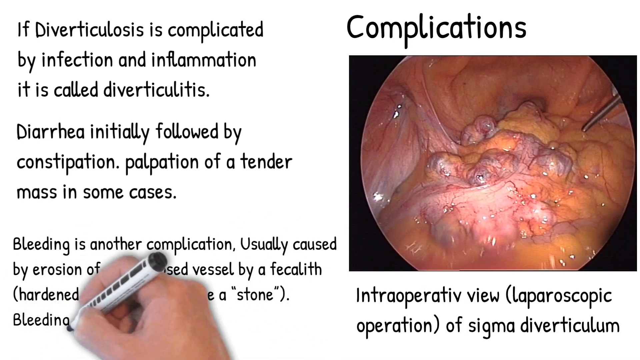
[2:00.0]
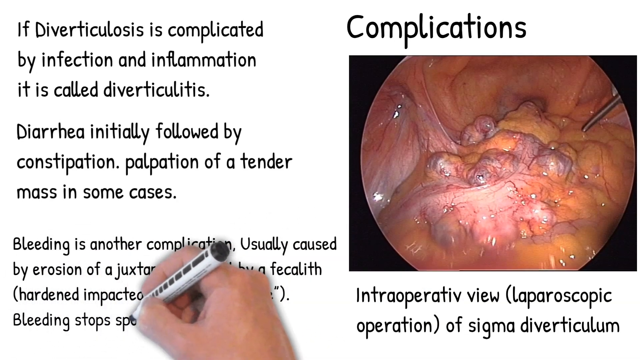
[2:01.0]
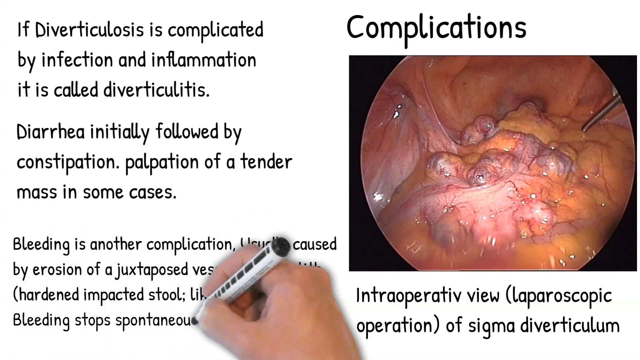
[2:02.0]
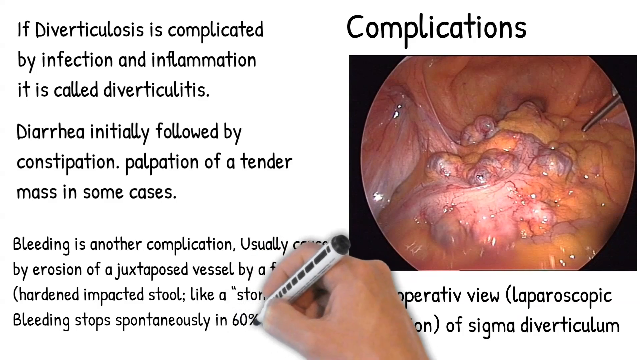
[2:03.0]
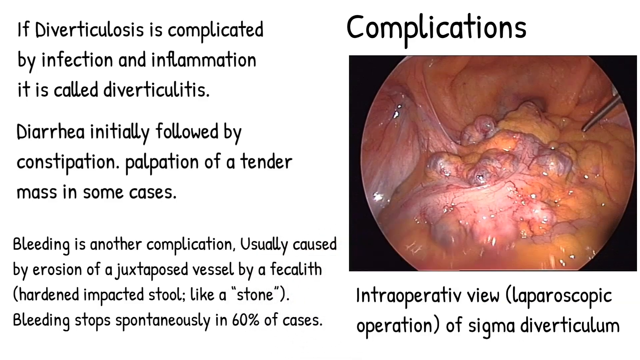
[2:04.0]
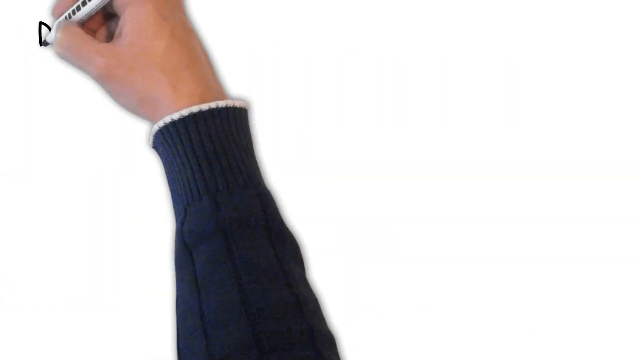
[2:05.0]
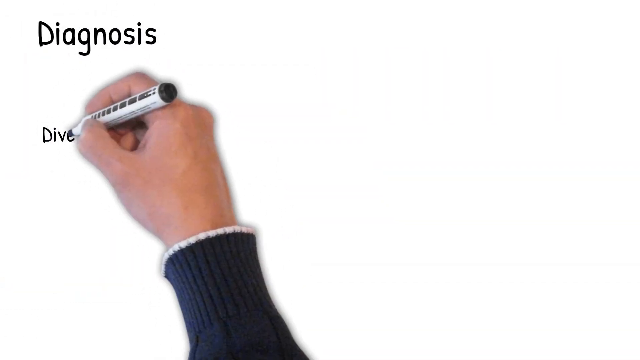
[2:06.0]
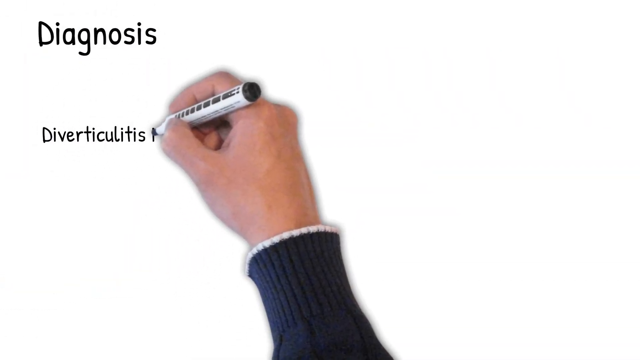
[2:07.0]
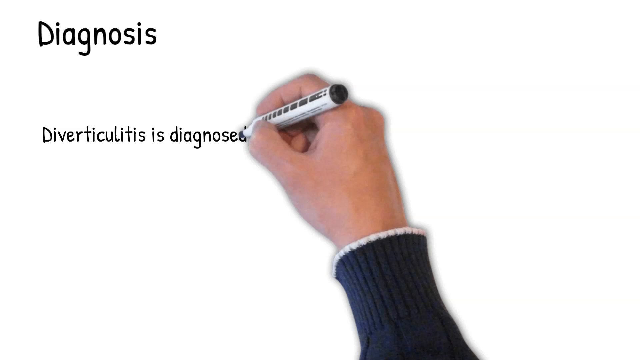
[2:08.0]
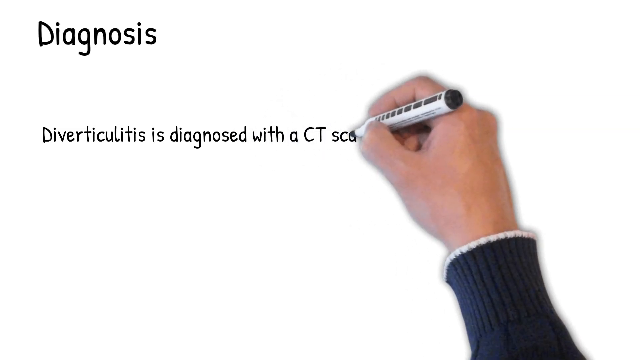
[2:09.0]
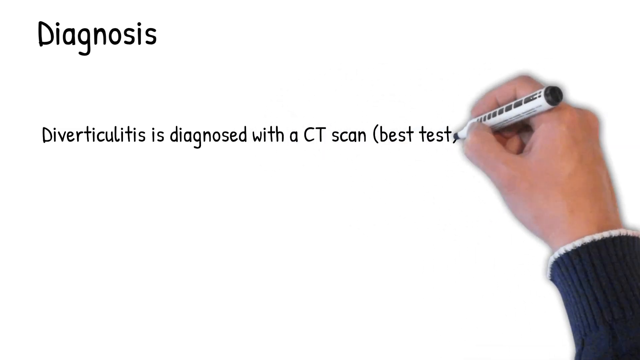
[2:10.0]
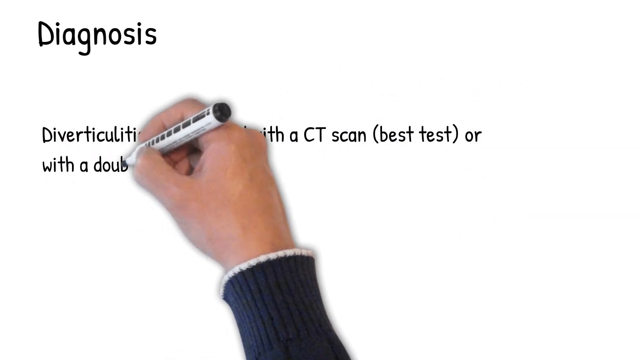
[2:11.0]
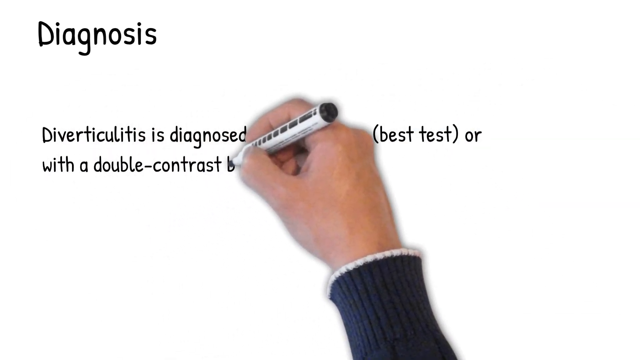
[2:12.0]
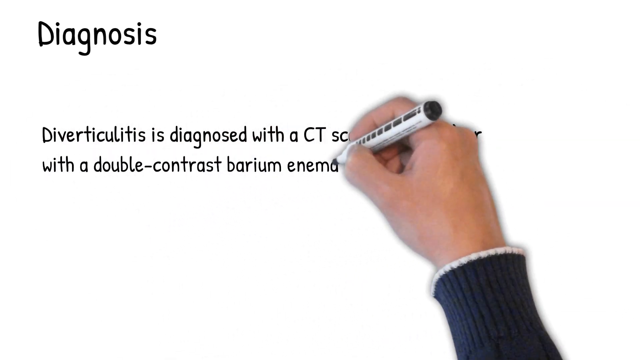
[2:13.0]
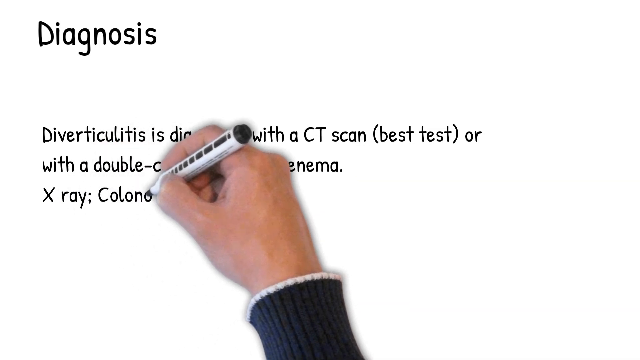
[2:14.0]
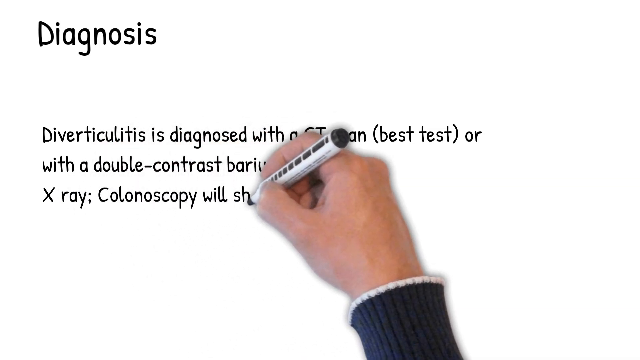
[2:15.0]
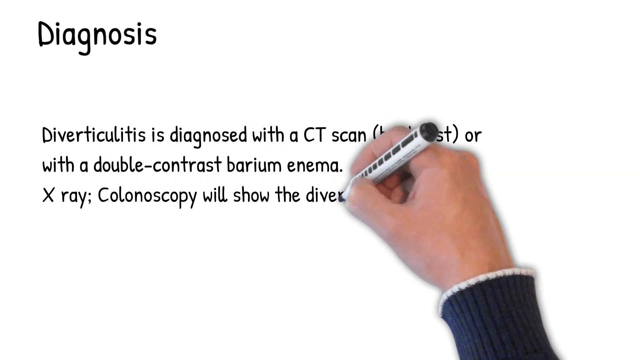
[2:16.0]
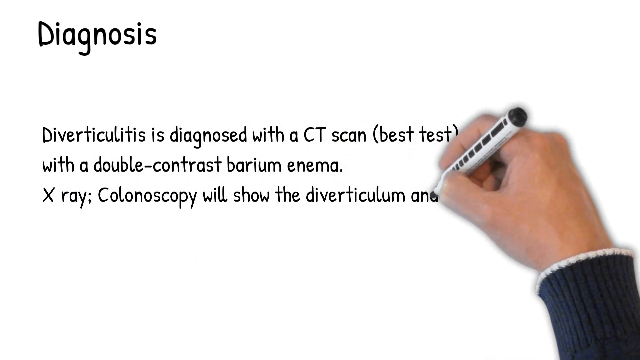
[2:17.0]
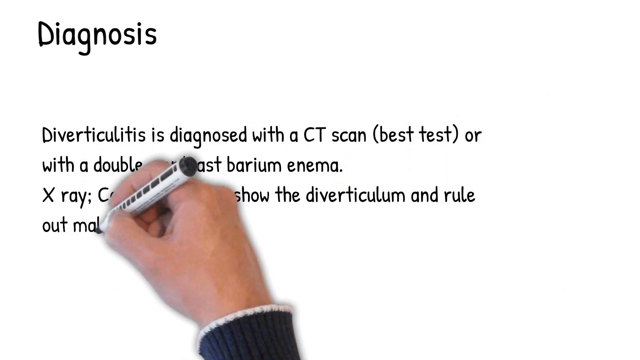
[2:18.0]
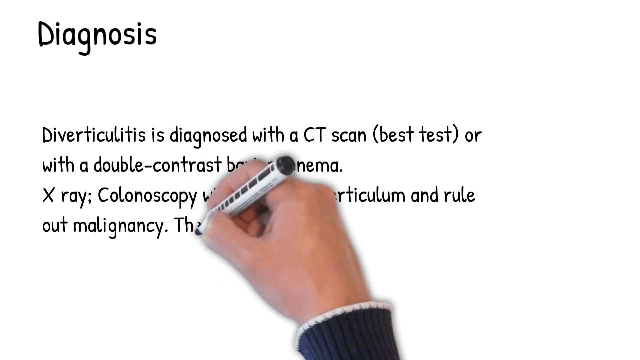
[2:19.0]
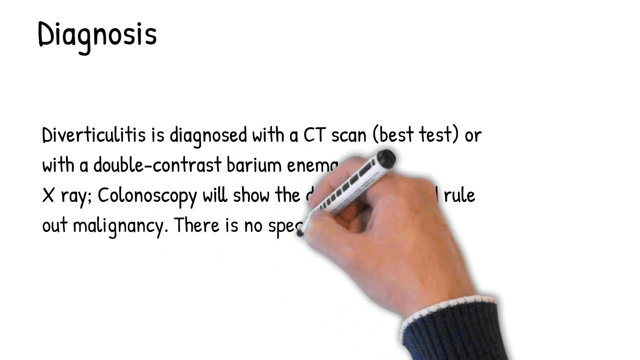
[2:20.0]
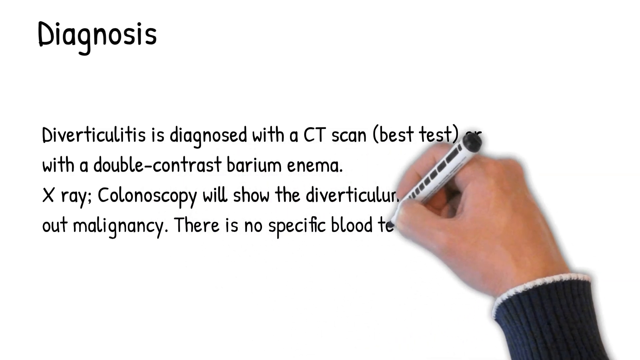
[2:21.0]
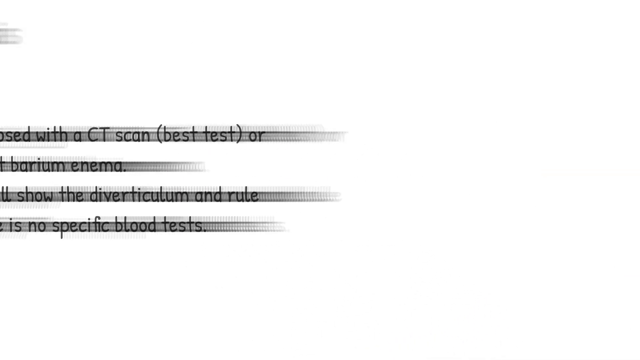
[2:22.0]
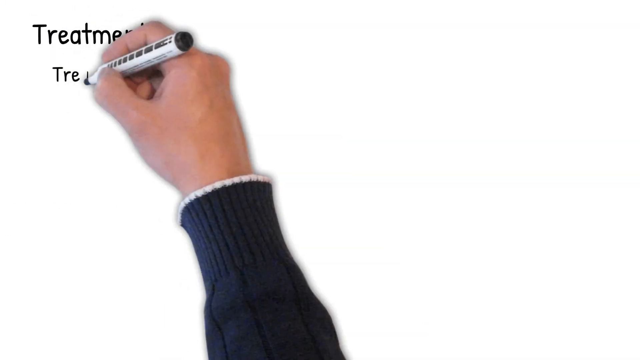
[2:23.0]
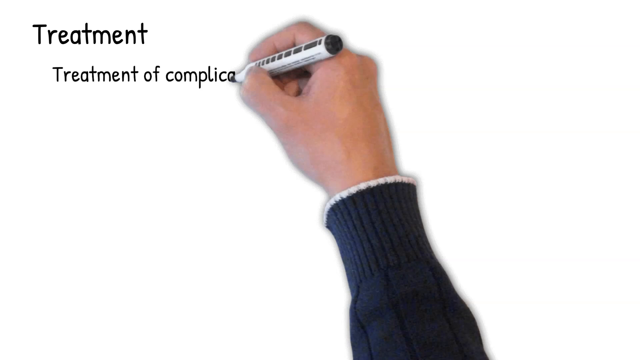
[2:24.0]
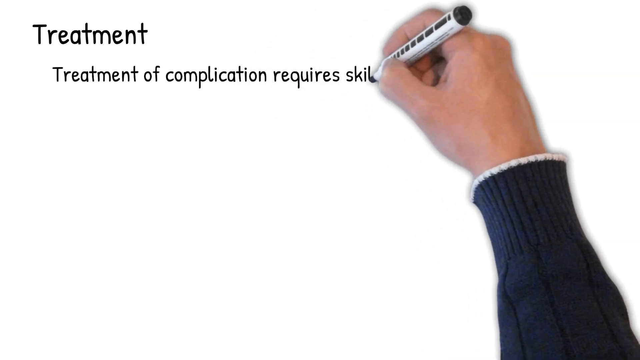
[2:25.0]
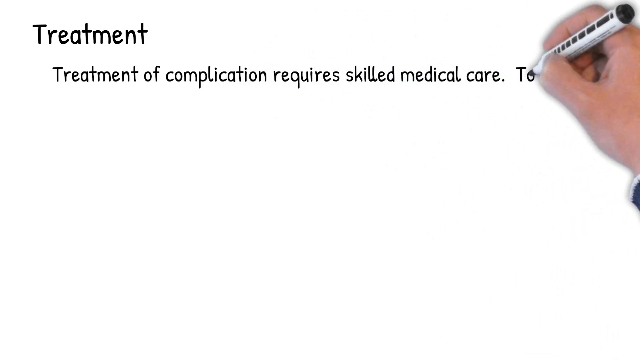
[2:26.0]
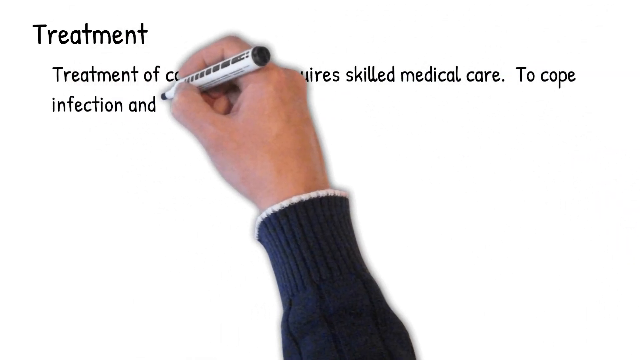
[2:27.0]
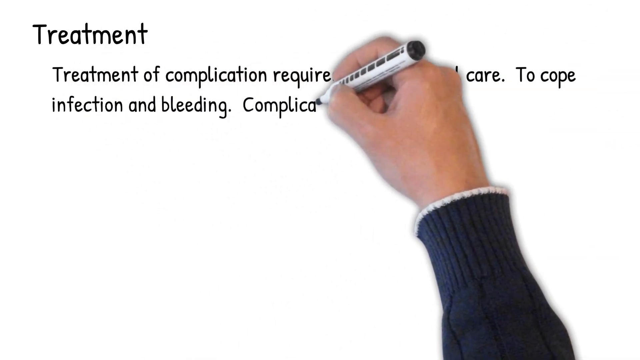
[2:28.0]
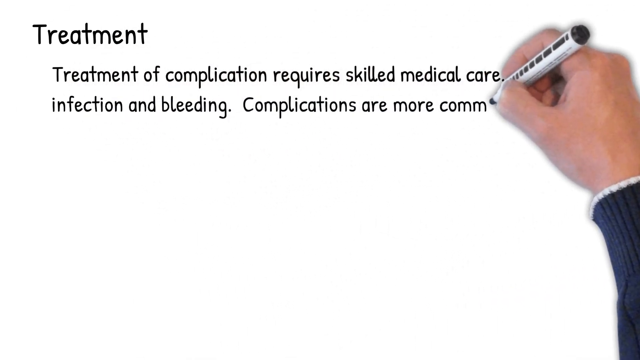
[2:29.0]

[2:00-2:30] The complications slide focuses on bleeding, with text saying it is usually caused by the erosion of a vessel by a hardened stool and that in 60% of cases the bleeding usually stops. The video then moves to a diagnosis slide: text says a CT scan is the best test, that a double contrast barium enema, an x-ray or a colonoscopy will show the diverticulum and rule out malignancy, and that there is no specific blood test. Next, text on treatment says "treatment of the complication requires skilled medical care to cope with the infection and the bleeding."